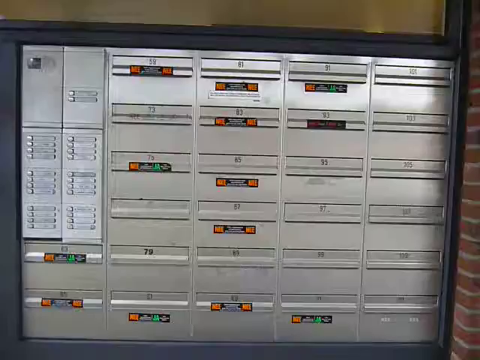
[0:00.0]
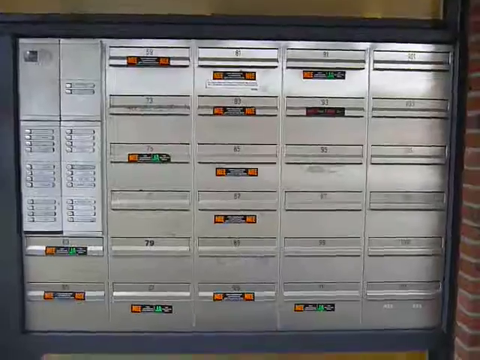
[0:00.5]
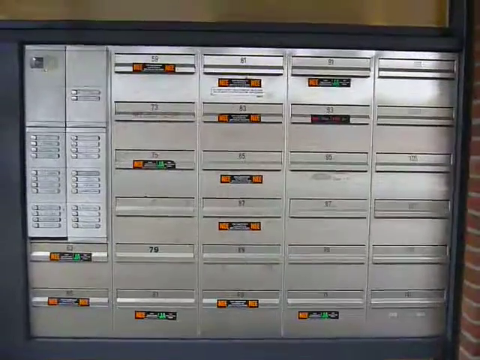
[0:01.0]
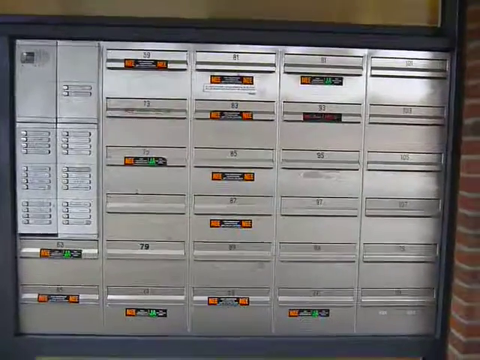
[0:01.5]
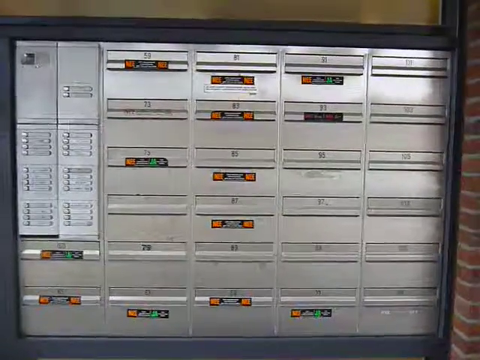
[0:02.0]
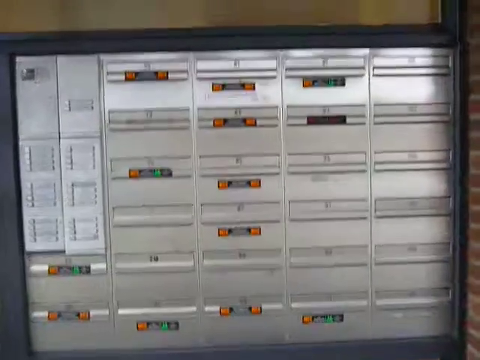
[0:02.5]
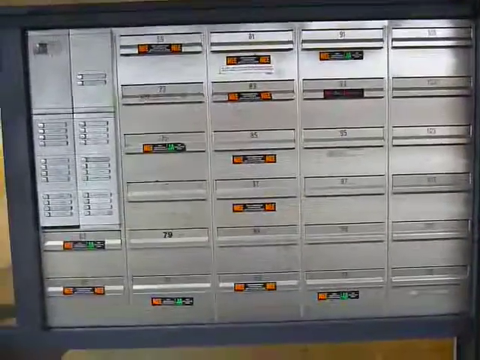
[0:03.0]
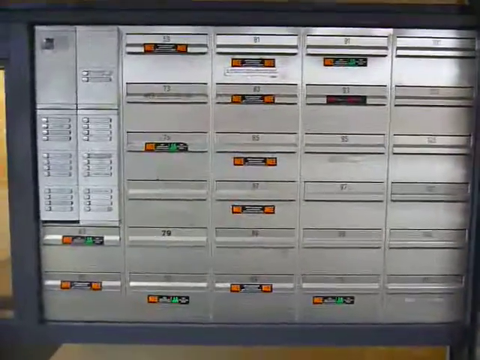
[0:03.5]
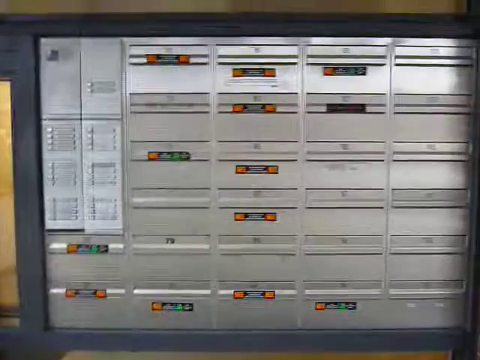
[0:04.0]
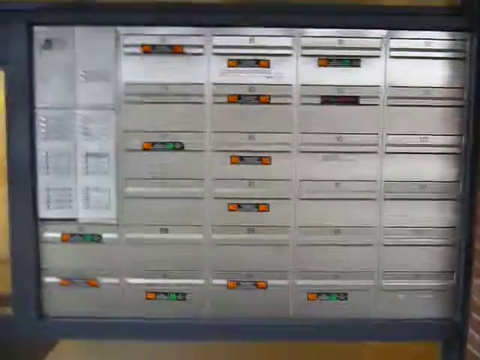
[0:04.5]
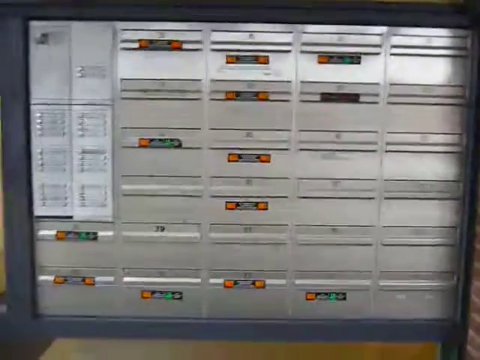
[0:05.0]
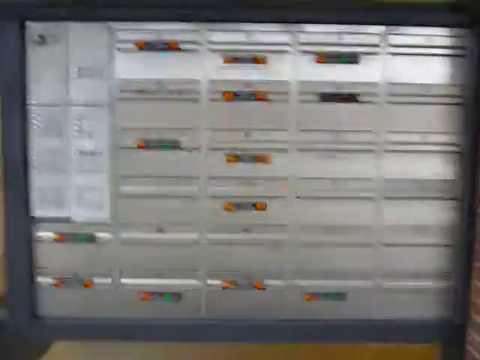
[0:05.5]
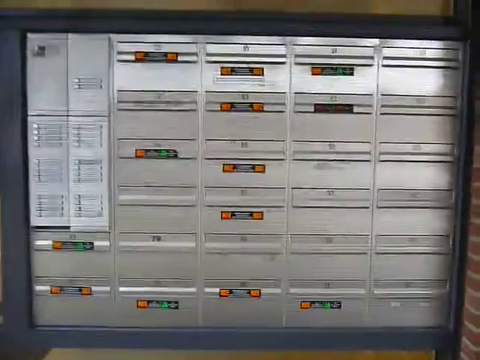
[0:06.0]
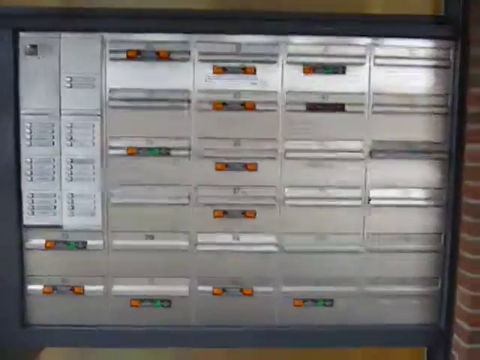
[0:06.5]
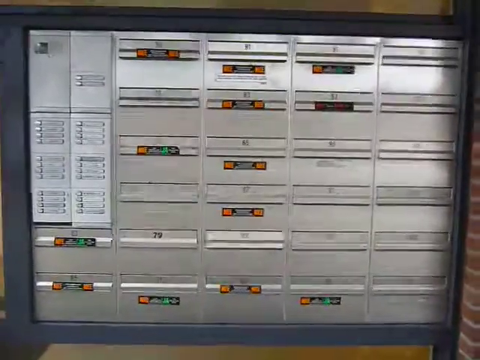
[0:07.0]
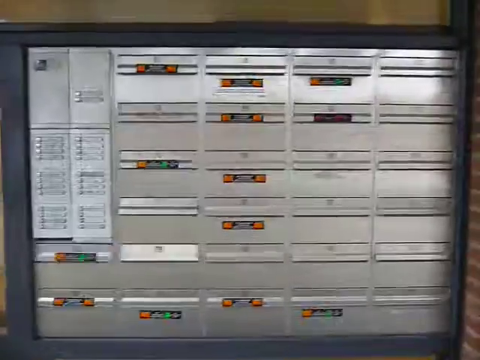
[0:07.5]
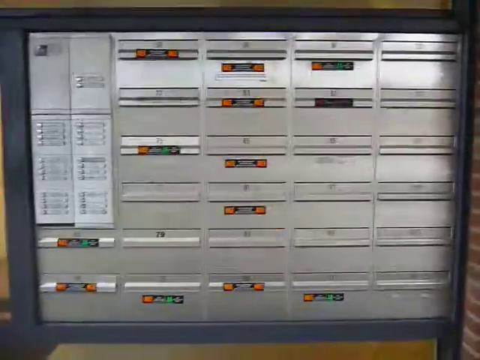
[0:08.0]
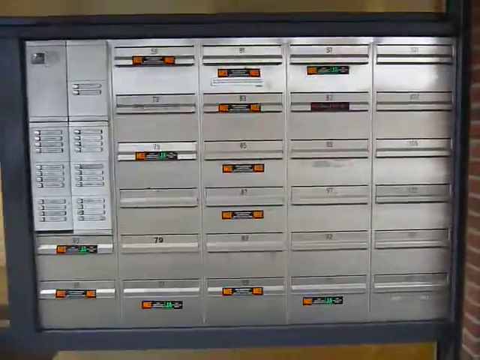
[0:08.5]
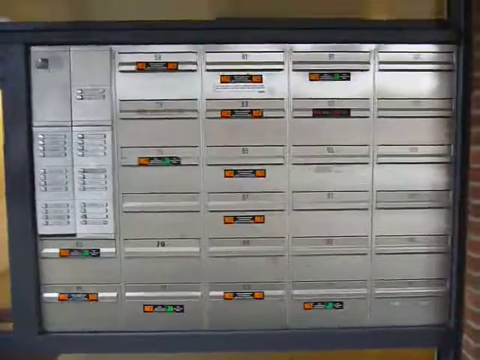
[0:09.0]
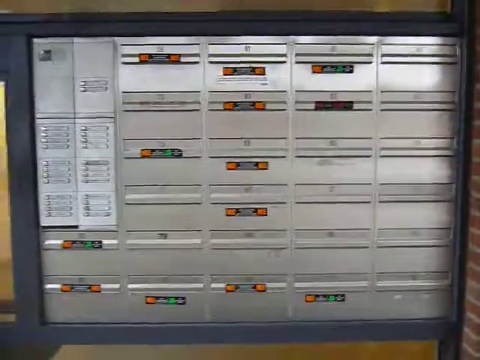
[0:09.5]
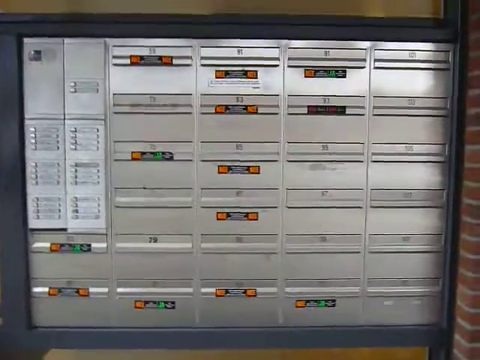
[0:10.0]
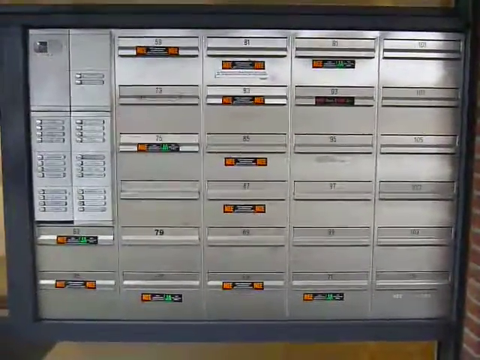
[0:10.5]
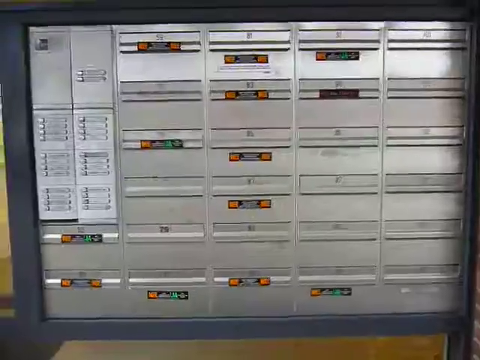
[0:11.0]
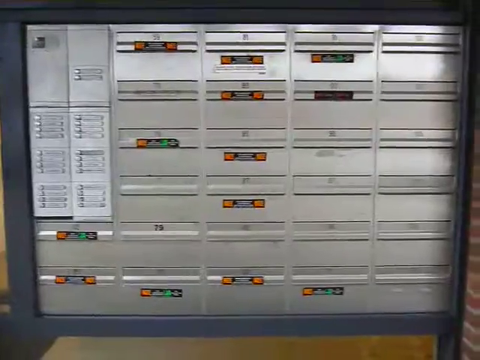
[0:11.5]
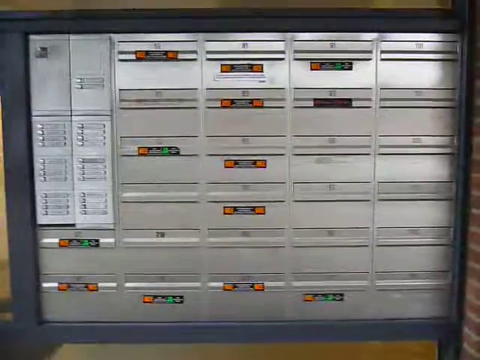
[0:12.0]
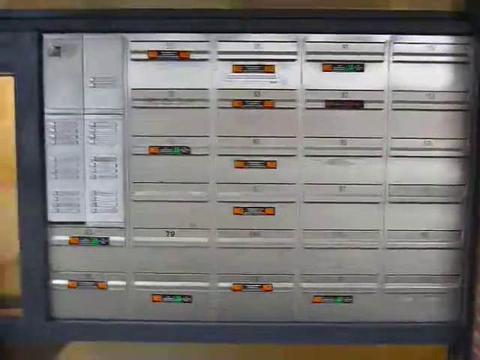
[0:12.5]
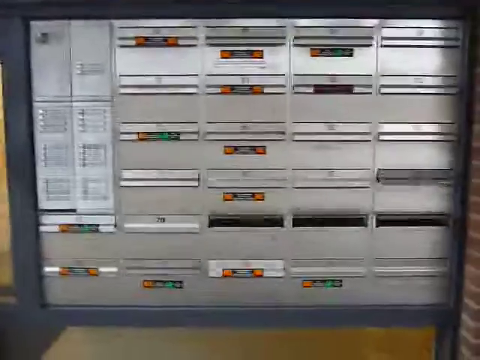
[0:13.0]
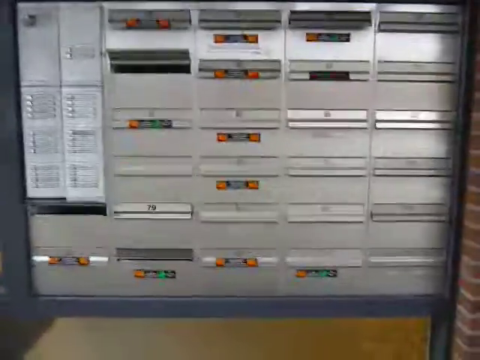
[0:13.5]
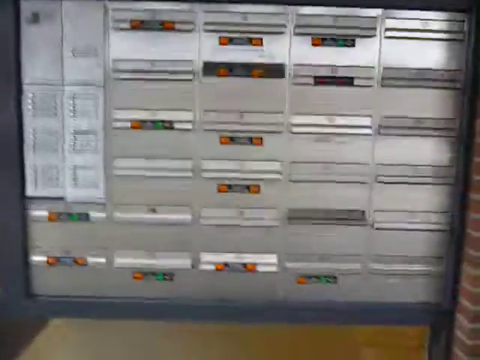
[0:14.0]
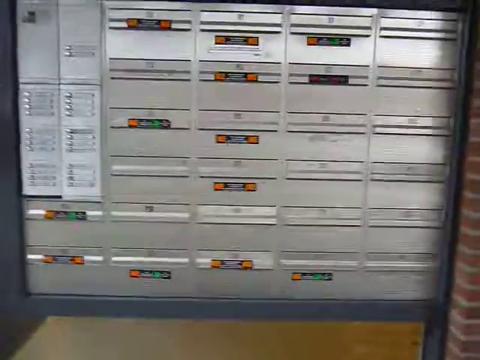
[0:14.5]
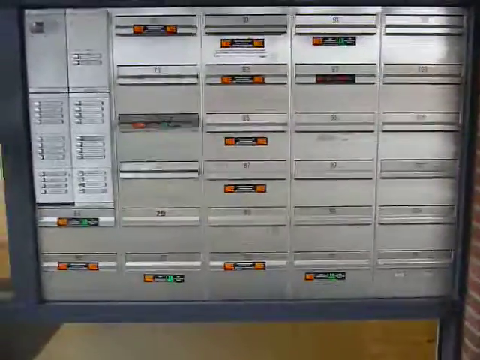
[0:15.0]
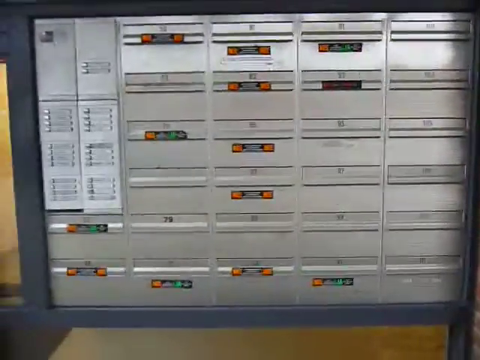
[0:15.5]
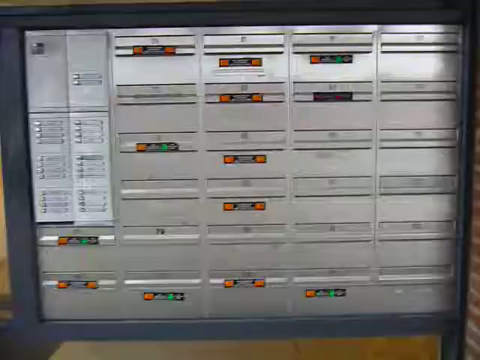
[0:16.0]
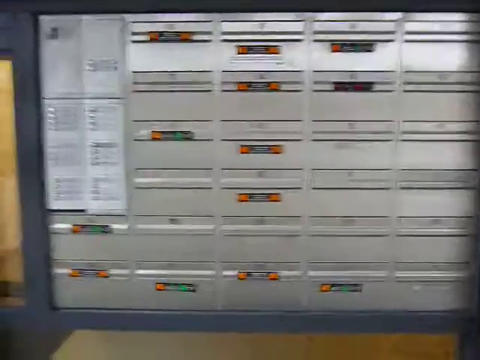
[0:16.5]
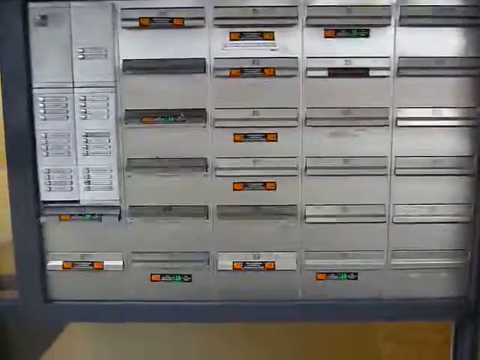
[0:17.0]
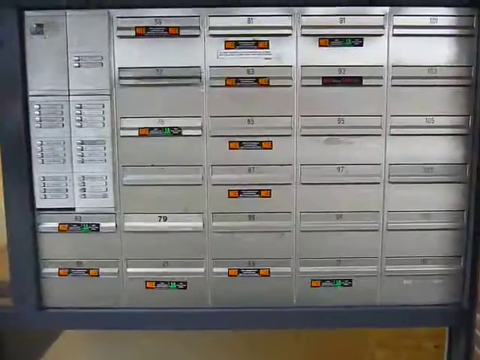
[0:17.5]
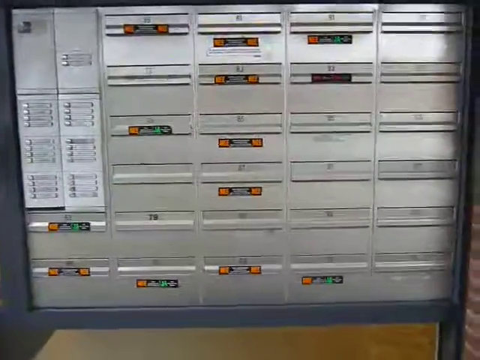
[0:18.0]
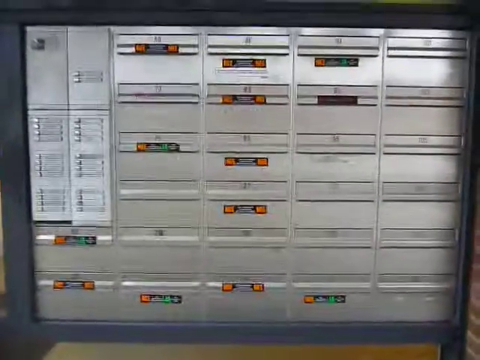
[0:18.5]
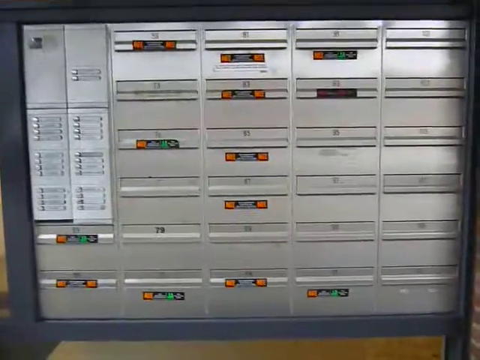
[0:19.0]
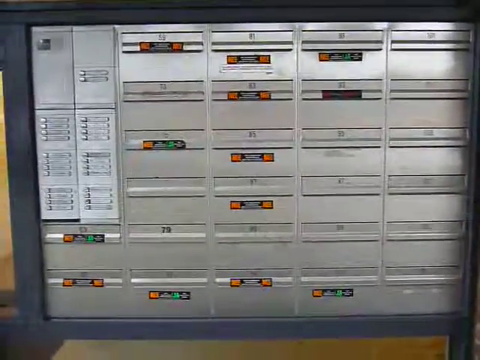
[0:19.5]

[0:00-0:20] The scene is hard to make out at first, but it appears to be a series of letter boxes in an apartment building. The footage is very shaky, with the person holding the camera moving around a lot, so it is not a professionally produced video. As the video progresses, many of the little flaps on the letter boxes begin to jump and move around a lot, almost as though they are in a strong wind or some sort of earthquake. Possibly it is an earthquake, given the way the camera is shaking, or possibly a very strong wind is making the flaps shake.